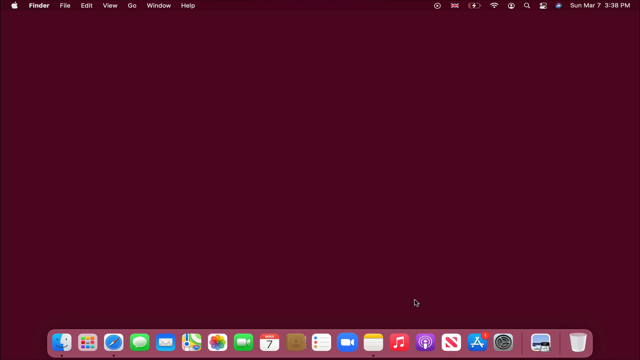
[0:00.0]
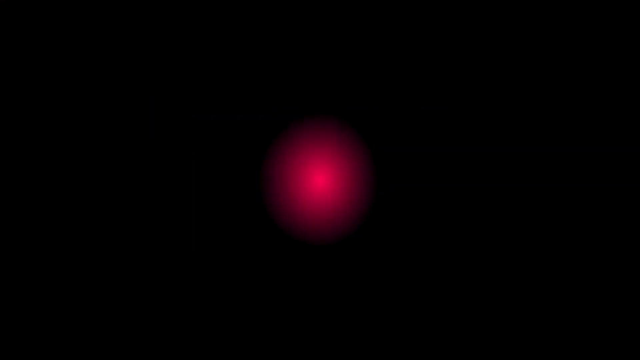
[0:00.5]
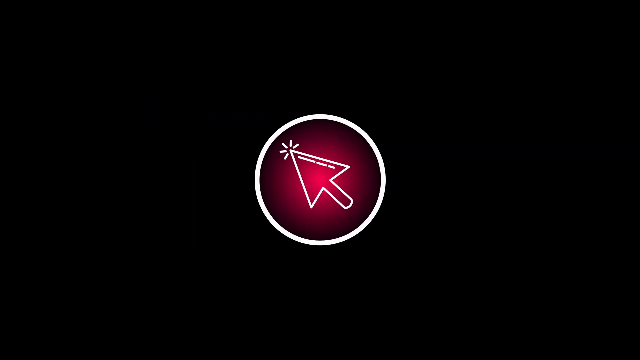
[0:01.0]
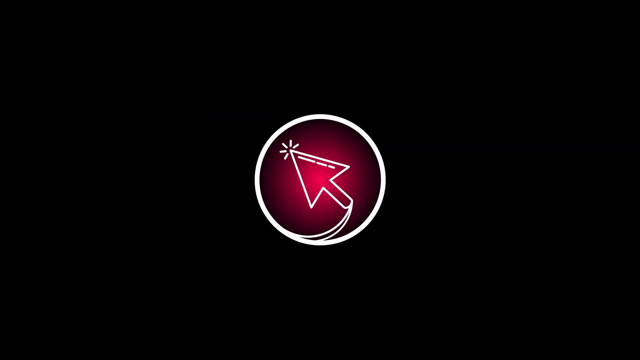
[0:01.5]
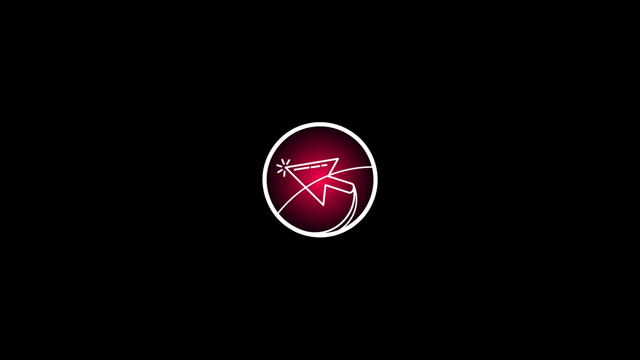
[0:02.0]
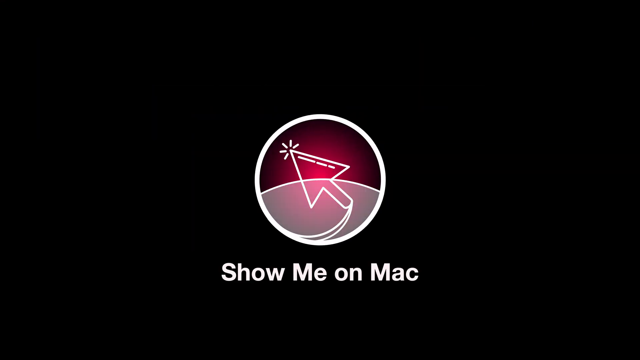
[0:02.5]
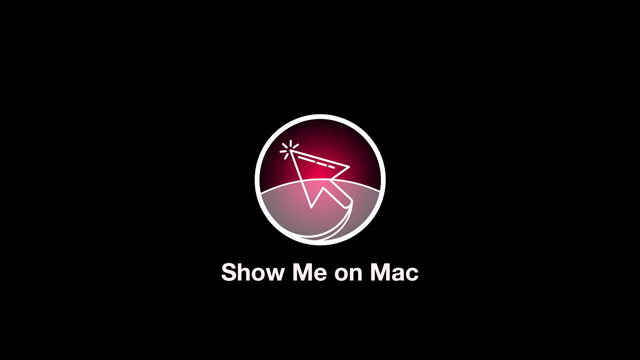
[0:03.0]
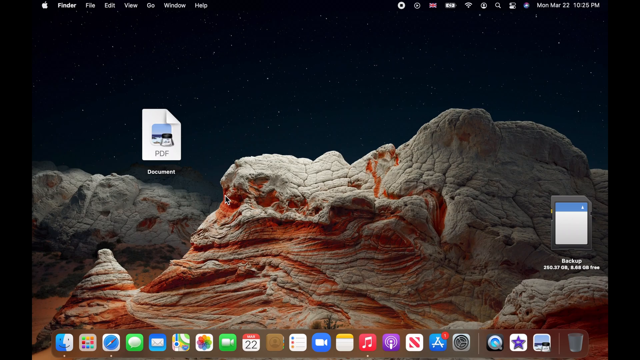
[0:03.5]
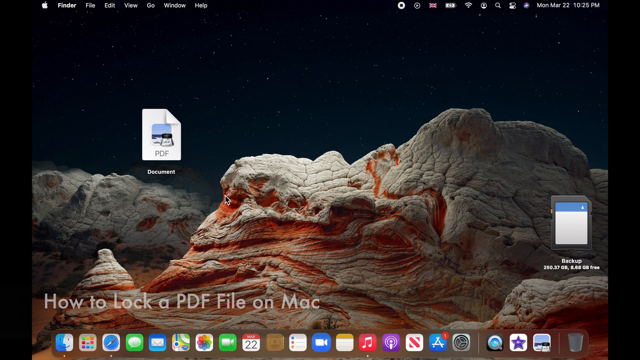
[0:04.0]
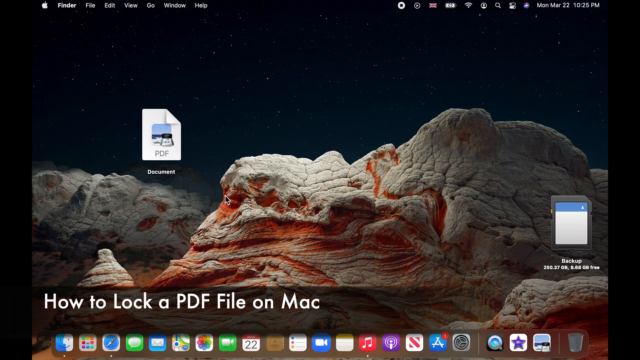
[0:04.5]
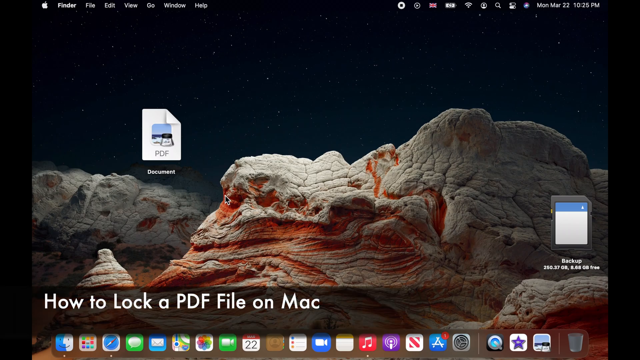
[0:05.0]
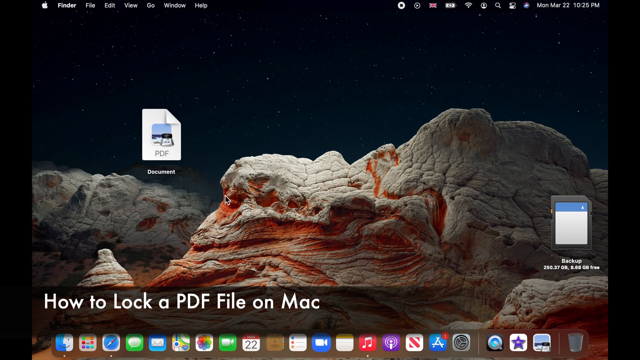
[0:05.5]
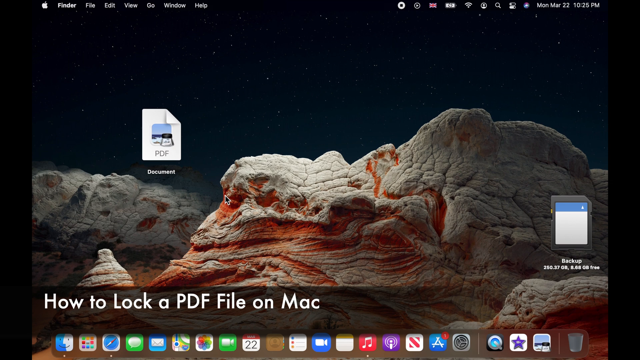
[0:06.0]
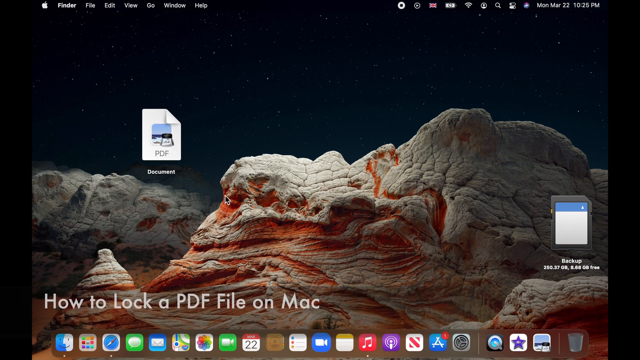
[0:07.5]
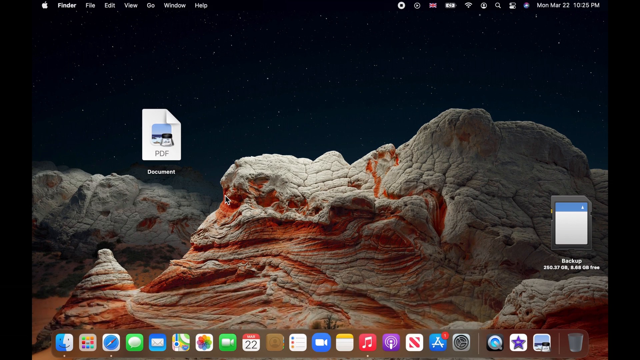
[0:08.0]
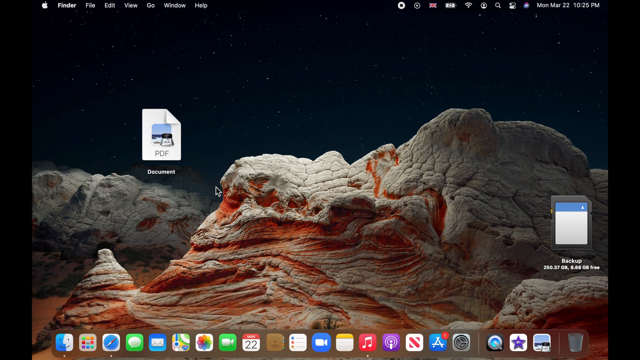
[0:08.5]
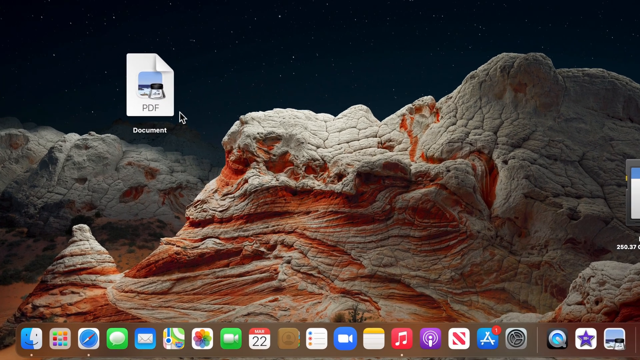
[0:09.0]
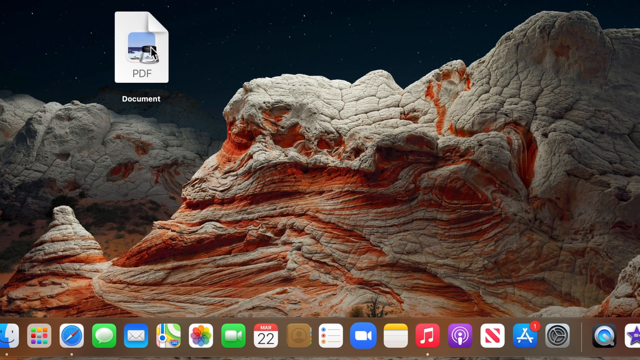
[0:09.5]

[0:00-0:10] The video opens on a black background showing a translucent cursor with a red background surrounded by a white circle. The icon flashes, and the text "Show me on Mac" appears underneath it. The view then pans to a desktop view of a Mac screen with the caption "How to lock a PDF file on Mac" at the bottom. The desktop is dated Monday, March 22nd, 10:25 p.m. There are two shortcuts on the desktop. On the middle left of the screen is one whose icon looks like a sheet of paper with the corner folded and says "PDF" on the icon itself; underneath it, the text "Document" is in white letters. On the rightmost side of the screen near the bottom is another shortcut that says "Backup", with a hard disk drive as its icon. The desktop background is some sort of alien planet with odd rock formations, with red marbling through beige-looking stones. Along the bottom are the usual Mac icons. The PDF icon is clicked, and the screen zooms in a little on that shortcut.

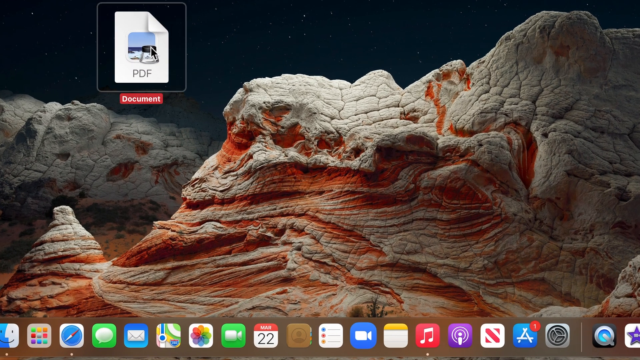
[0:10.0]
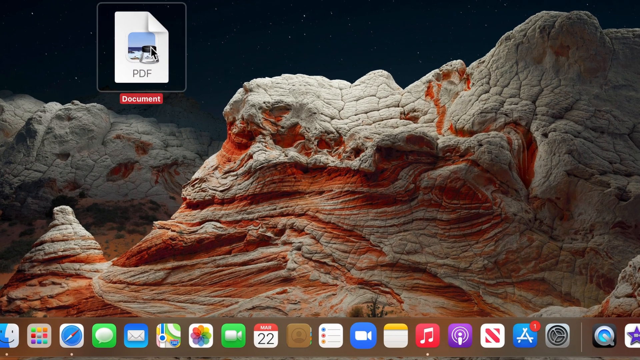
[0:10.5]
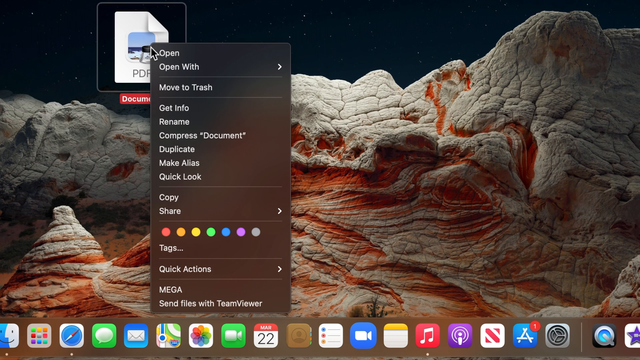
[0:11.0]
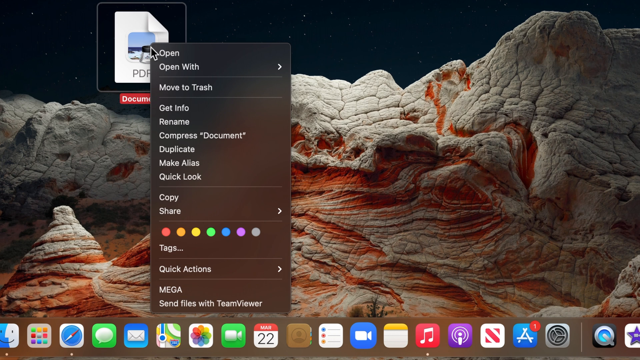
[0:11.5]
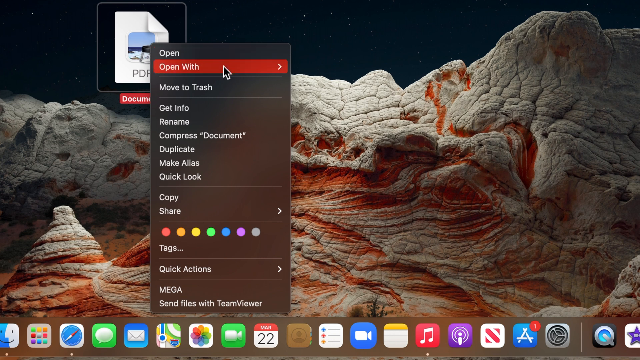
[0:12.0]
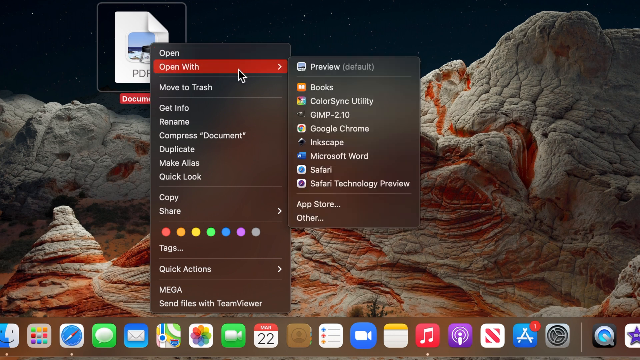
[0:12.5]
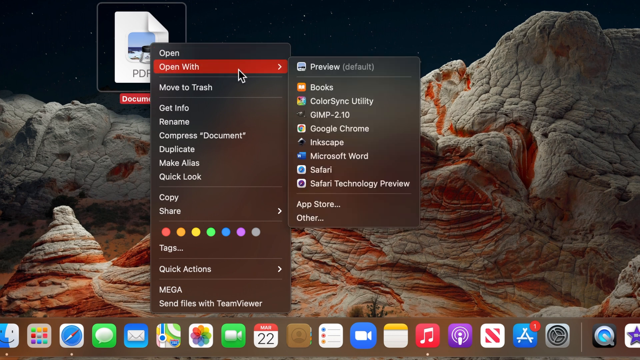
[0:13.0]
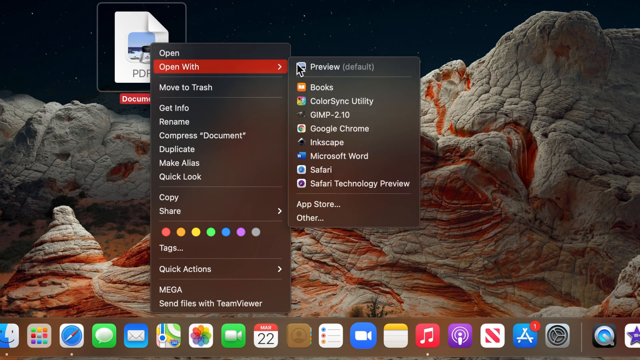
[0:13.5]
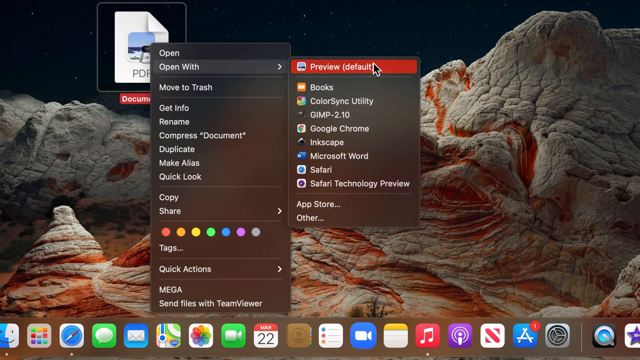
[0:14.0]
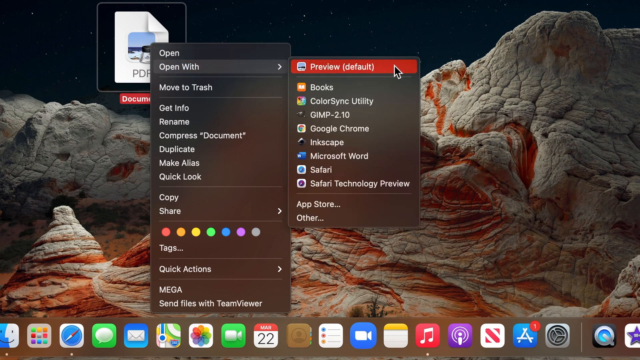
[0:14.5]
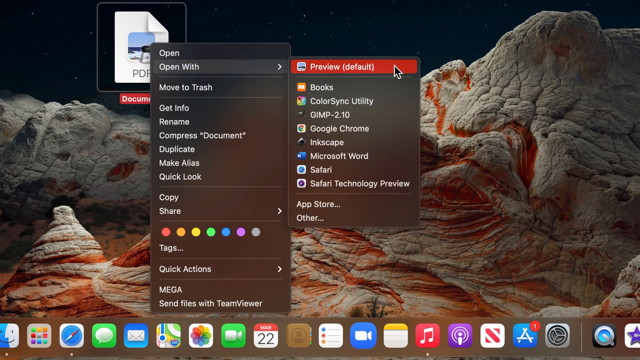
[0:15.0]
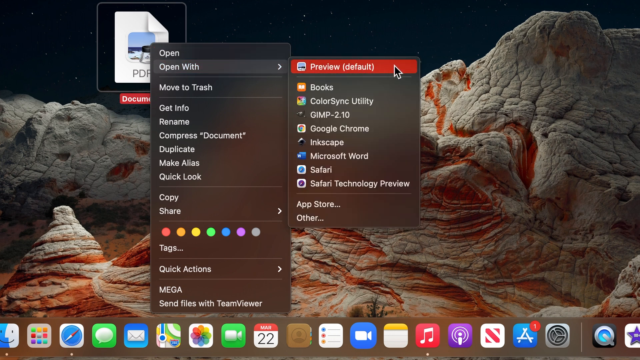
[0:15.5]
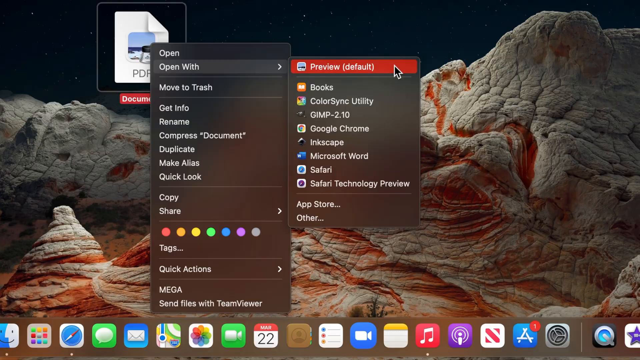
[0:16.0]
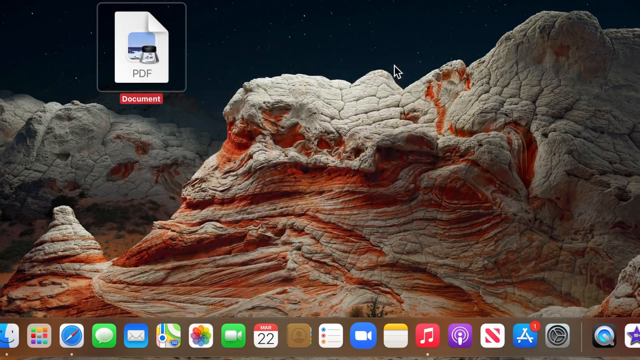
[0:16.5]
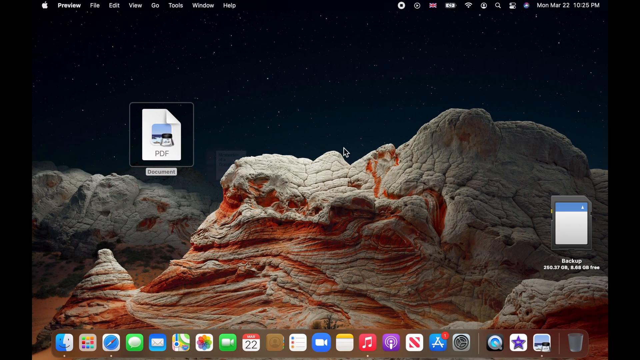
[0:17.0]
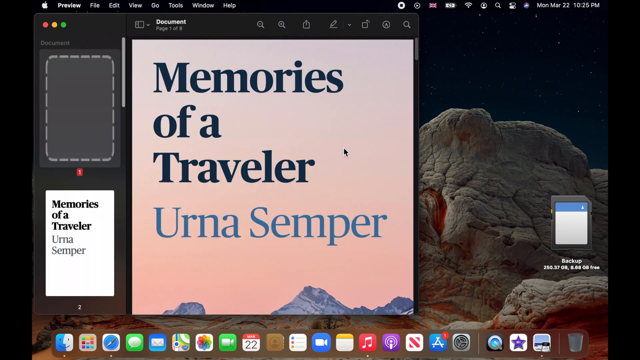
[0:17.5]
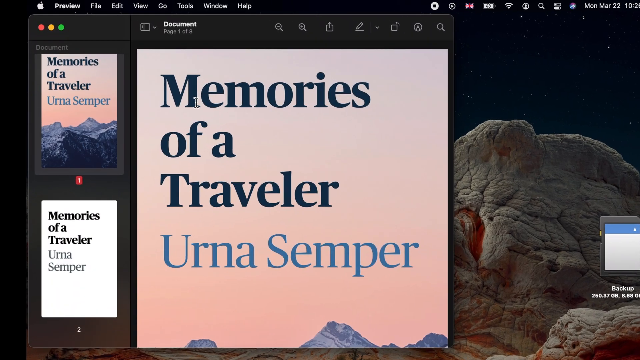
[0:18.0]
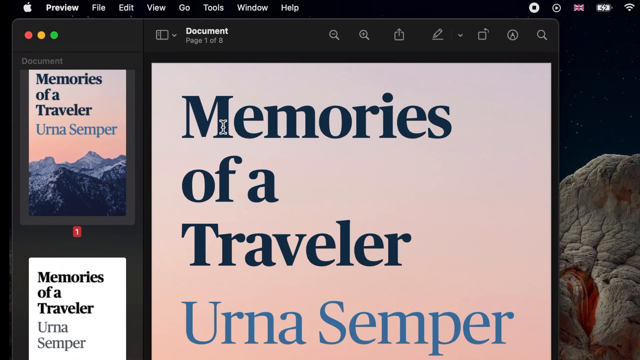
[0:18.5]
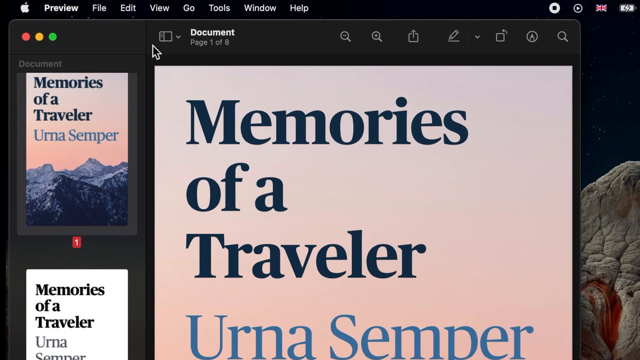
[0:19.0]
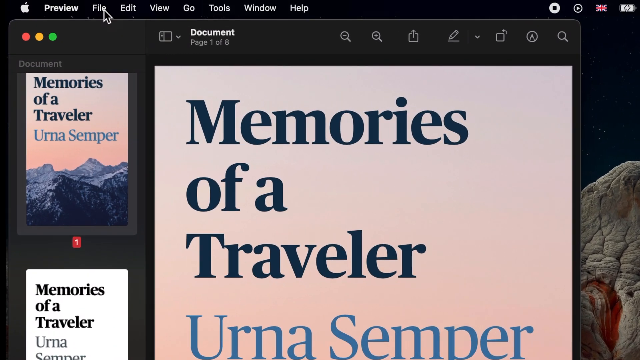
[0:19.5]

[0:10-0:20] The Mac desktop is shown, with icons for various apps spread across the bottom of the screen. The desktop background shows some sort of rock formation with beige and orangey-red layers. There is a shortcut to a file called "document"; judging by its icon, a sheet of paper with a folded corner and the lettering "PDF", it is a PDF document. The mouse moves to it and clicks it, opening a drop-down menu with options: "open", "open with", "move to trash", "get info", "rename", "compress document", "duplicate", "make alias", "quick look", "copy", "share", a row of different colored circles, "tags", "quick actions", "mega", and "send files with team viewer". The cursor hovers over "open with", which opens a submenu listing "preview (default)", followed by "books", "color sync utility", "GIMP 2.10", "Google Chrome", "Inkscape", "Microsoft Word", "Safari", "Safari technology preview", "app store", and "other". The cursor hovers over "preview (default)" and clicks it. This opens the document, titled "memories of a traveler", which has a background of mountains with a pink sky and the words "memories of a traveler, Ernest Semper" above them. The view then zooms in closer to the status bar of the program.